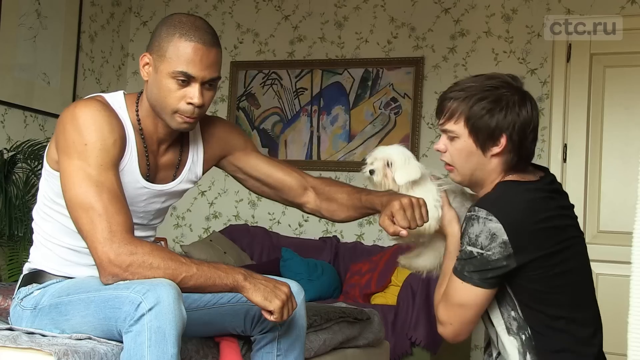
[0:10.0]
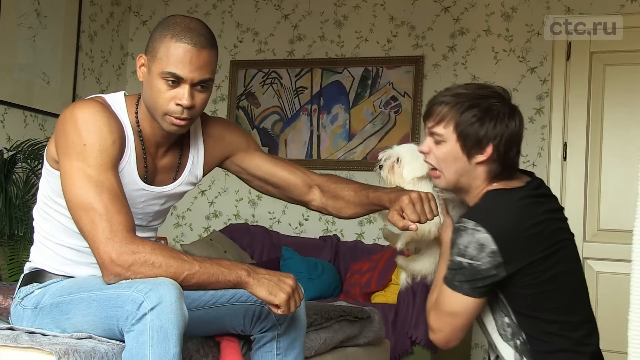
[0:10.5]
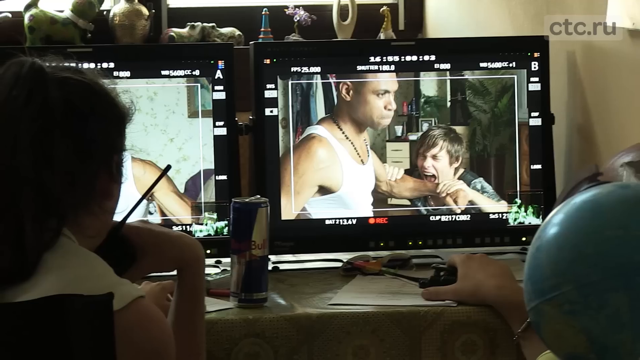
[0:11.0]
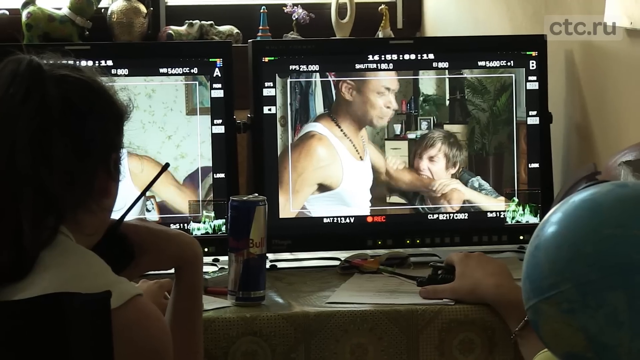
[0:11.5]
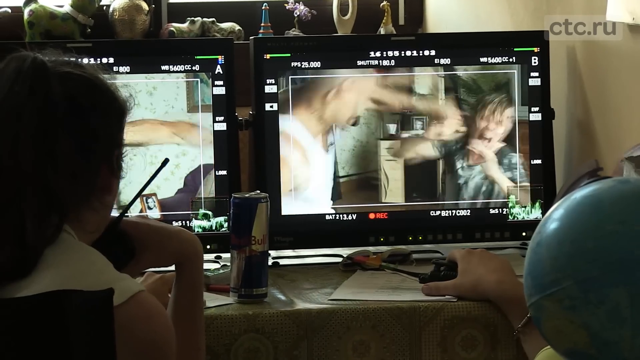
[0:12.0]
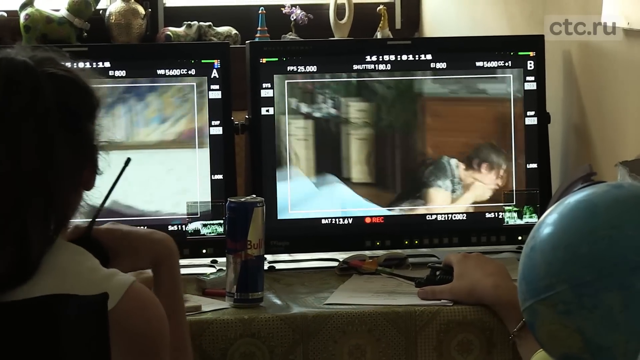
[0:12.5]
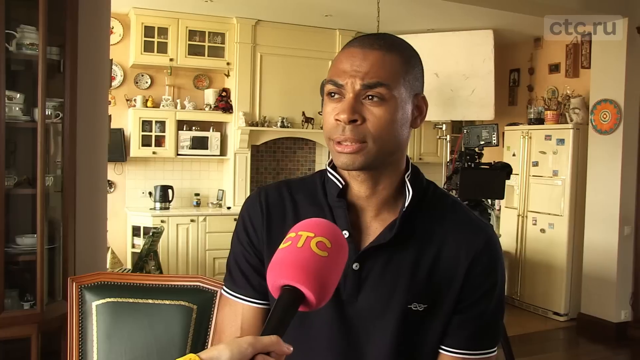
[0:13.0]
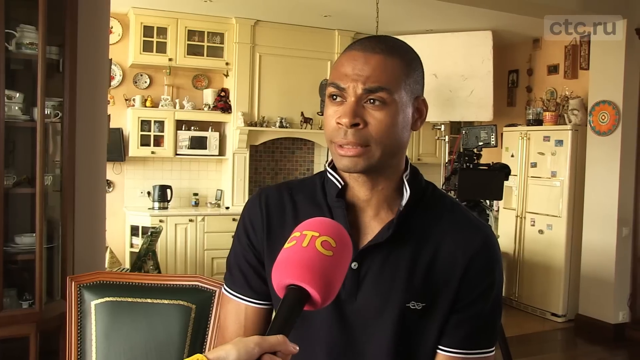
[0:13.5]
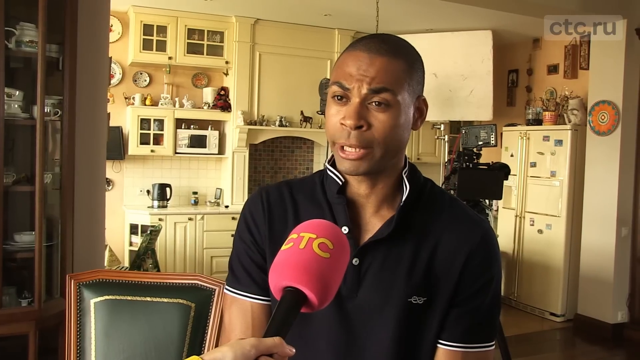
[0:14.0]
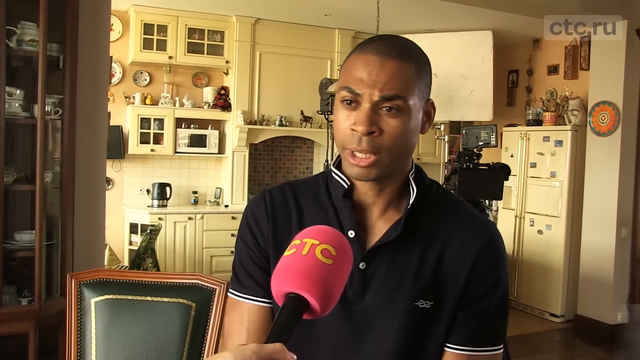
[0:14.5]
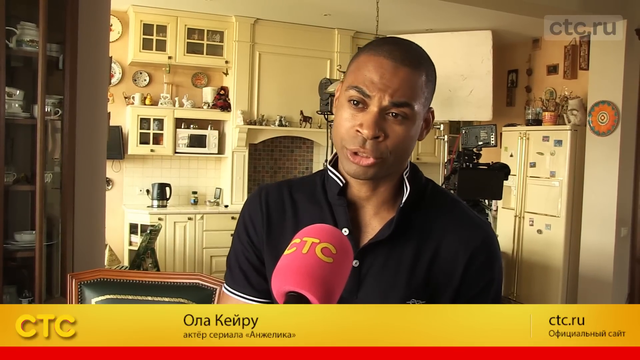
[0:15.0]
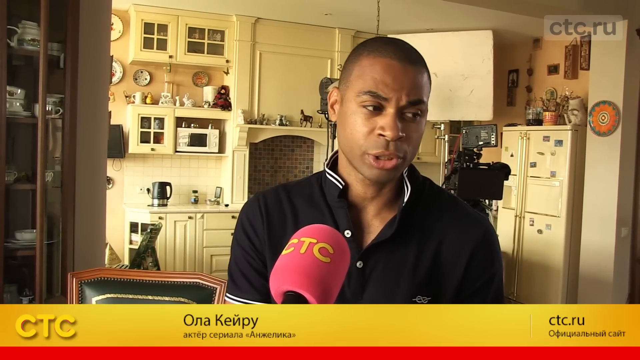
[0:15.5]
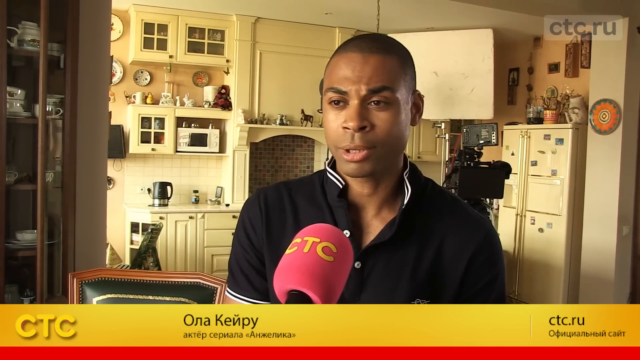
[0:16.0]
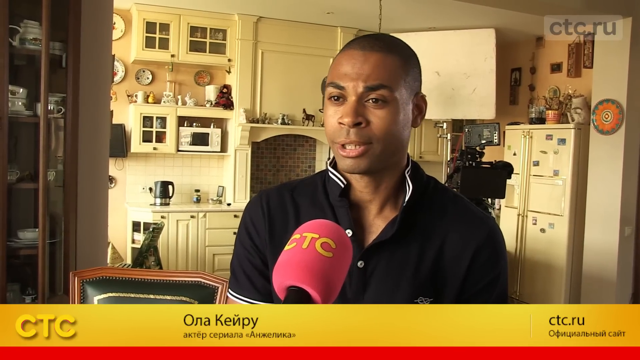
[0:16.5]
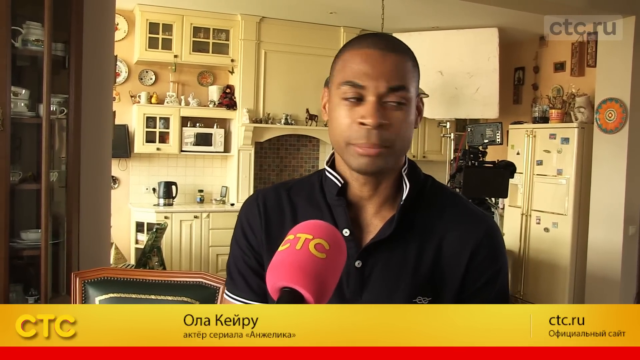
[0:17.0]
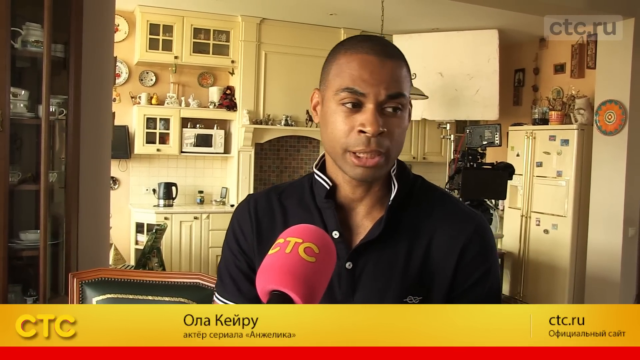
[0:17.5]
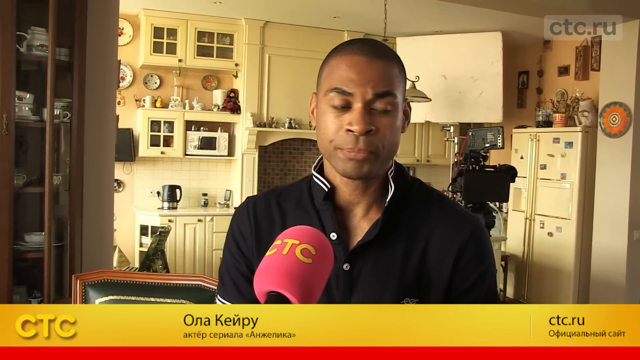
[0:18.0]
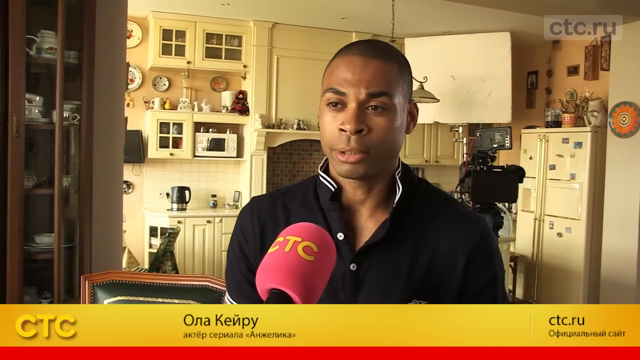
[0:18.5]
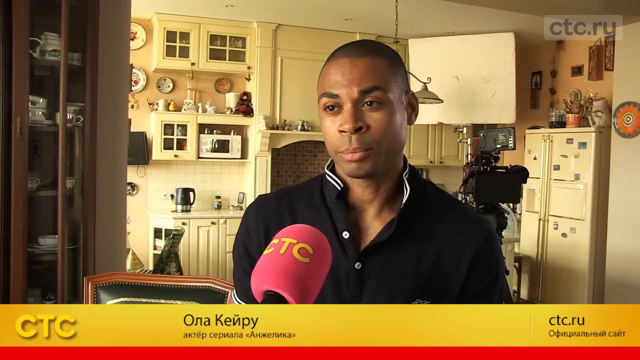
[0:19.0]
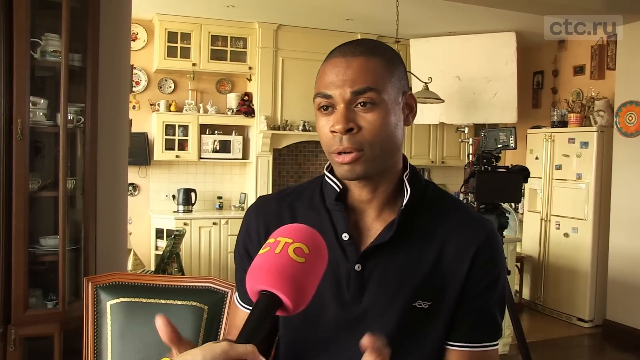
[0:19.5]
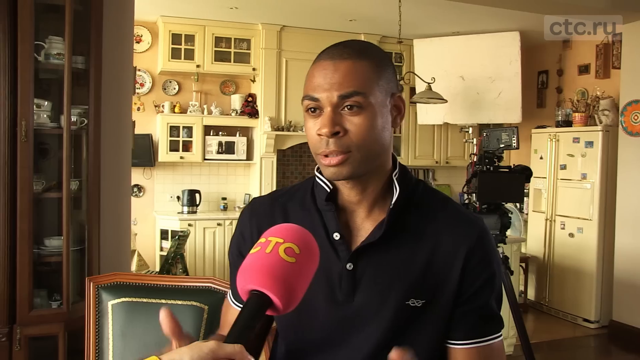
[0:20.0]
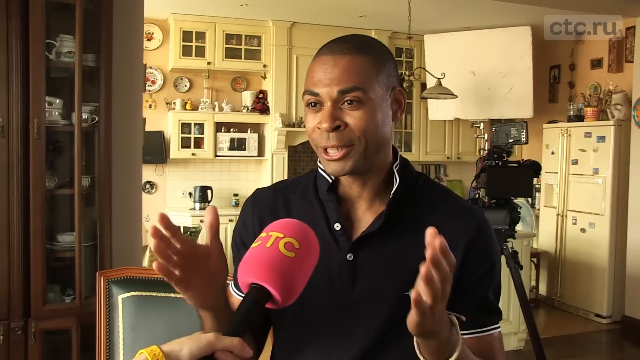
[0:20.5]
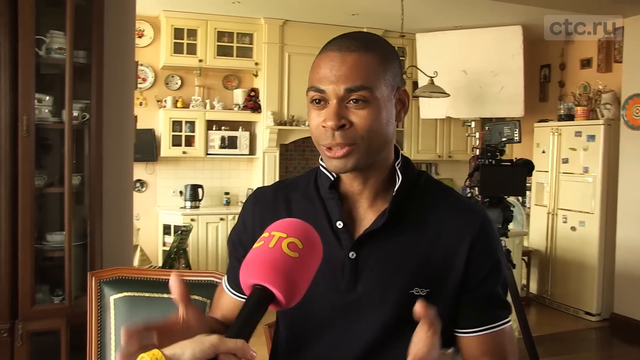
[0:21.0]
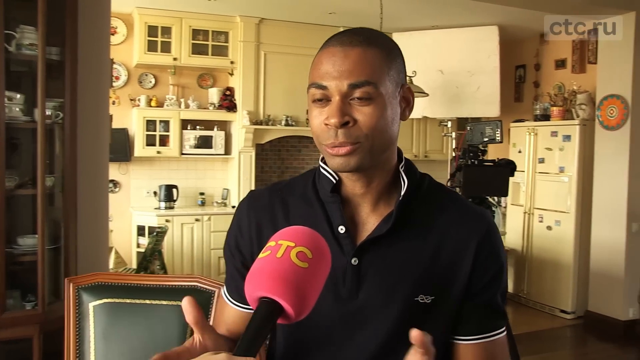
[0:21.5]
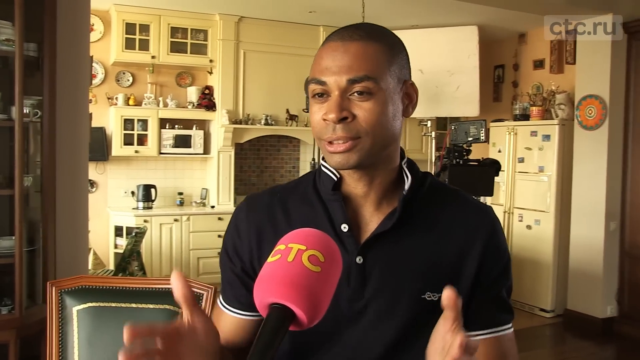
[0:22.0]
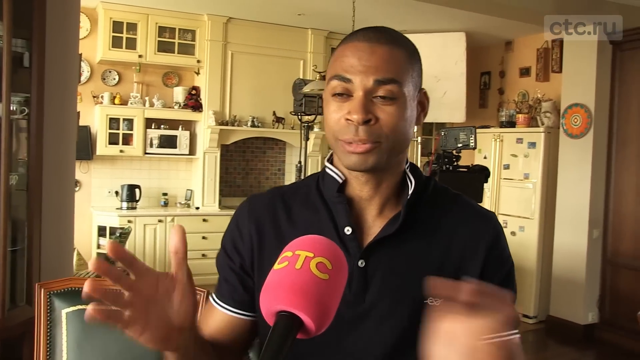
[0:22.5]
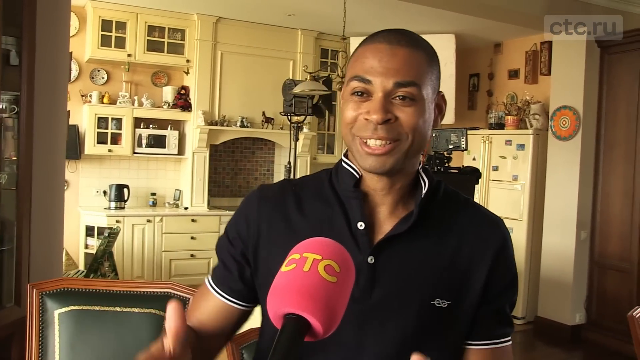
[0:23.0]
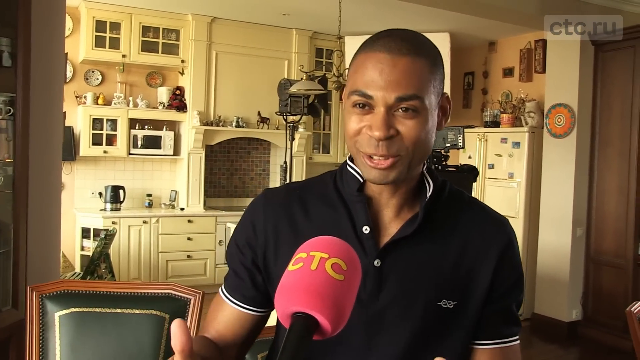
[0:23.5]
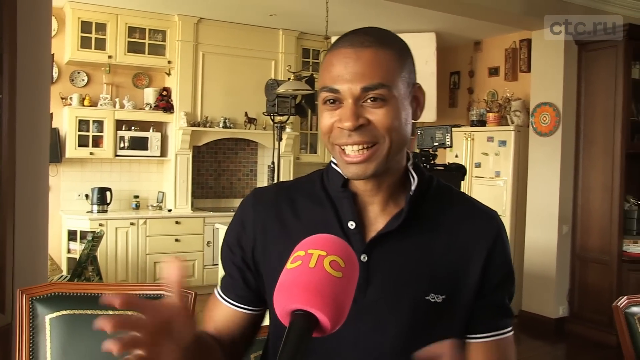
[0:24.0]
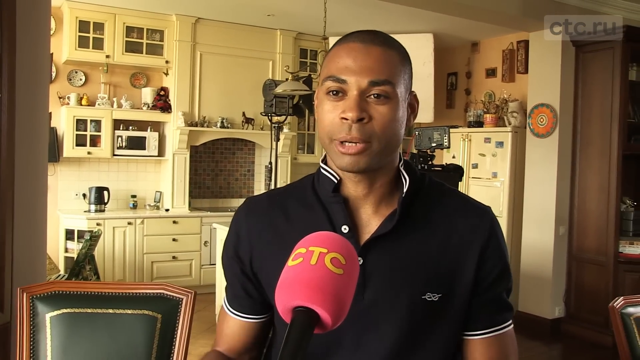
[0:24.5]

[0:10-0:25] In a scene, a guy holding a dog bites another guy, and then the video cuts straight to an interview with a black man in a black shirt, who is interviewed with a CTC microphone. He is standing behind the camera, smiling, and uses his hands to describe something. The backdrop looks like a kitchen, with a refrigerator in the background and maybe a fireplace or oven; there is a chair next to him. Very briefly two people appear, and then two dogs.